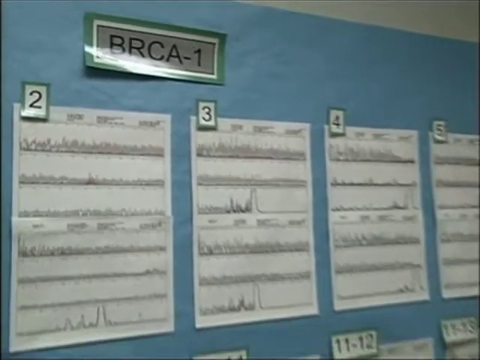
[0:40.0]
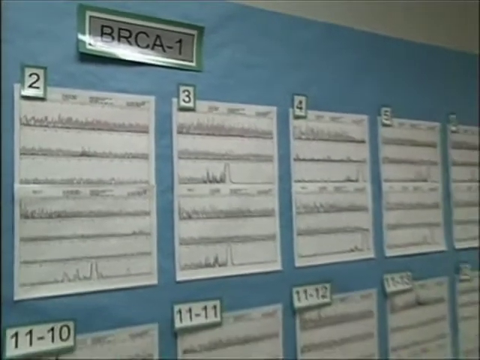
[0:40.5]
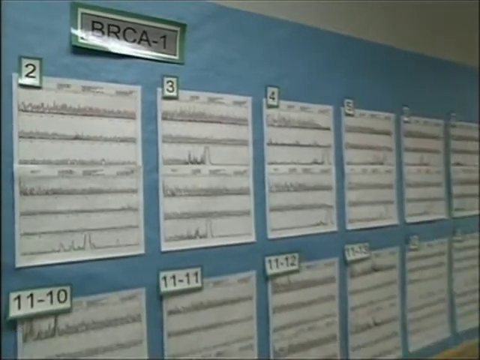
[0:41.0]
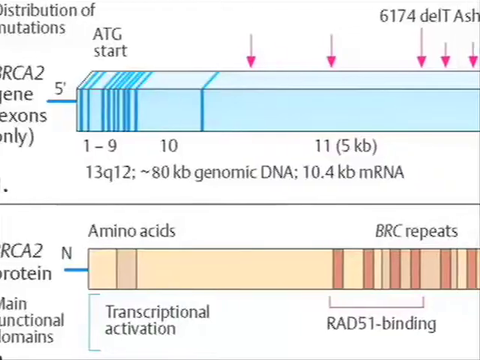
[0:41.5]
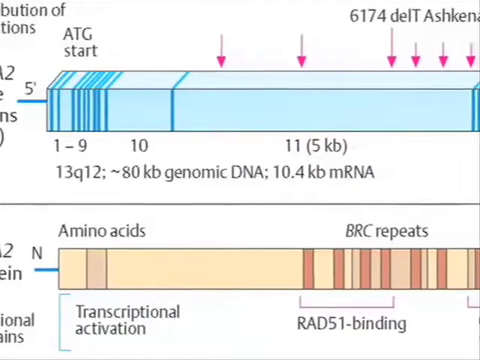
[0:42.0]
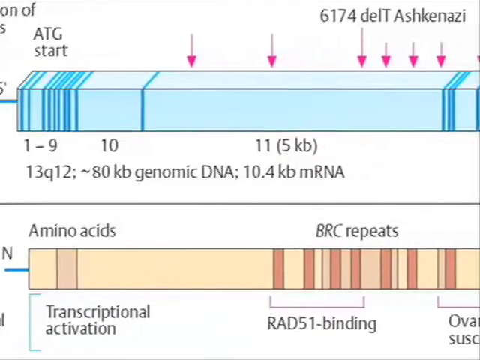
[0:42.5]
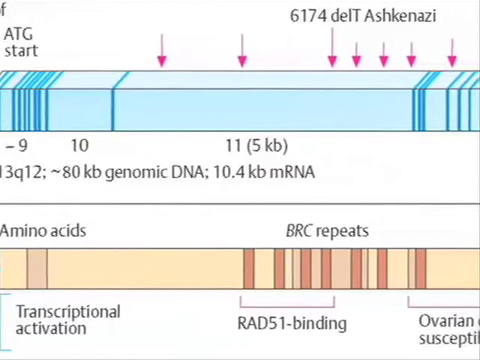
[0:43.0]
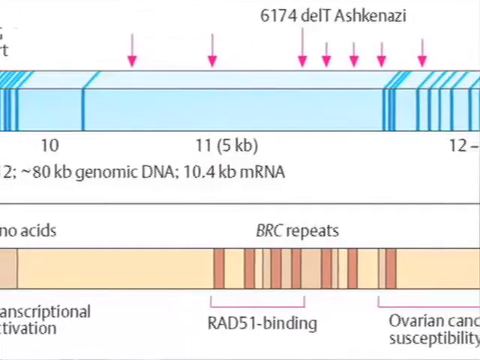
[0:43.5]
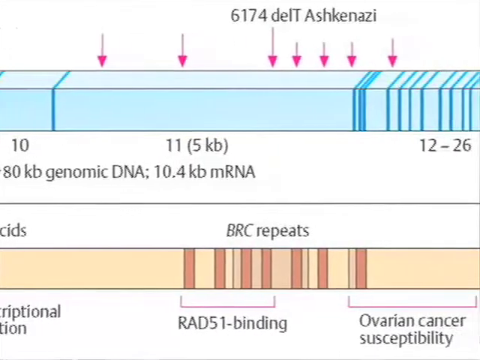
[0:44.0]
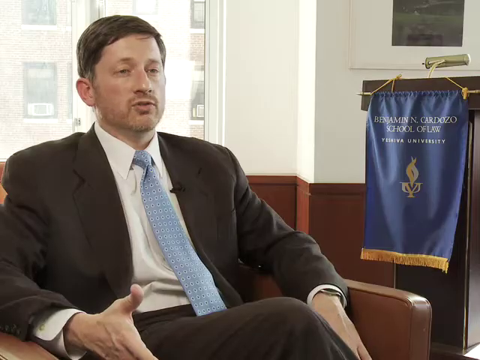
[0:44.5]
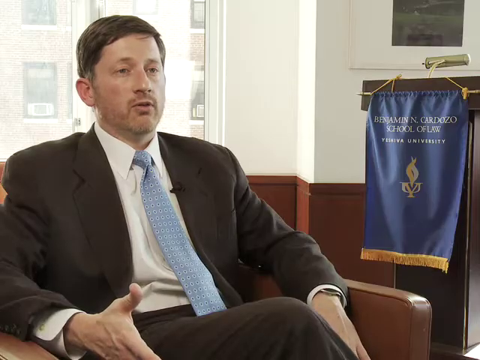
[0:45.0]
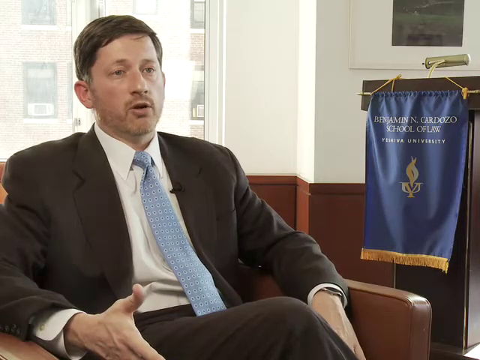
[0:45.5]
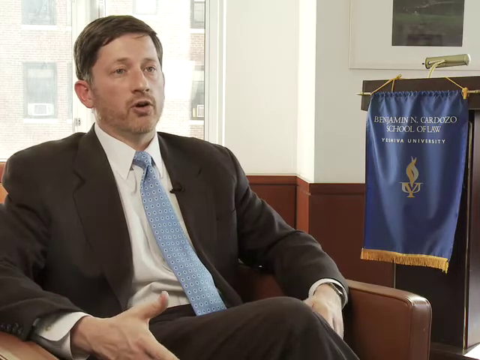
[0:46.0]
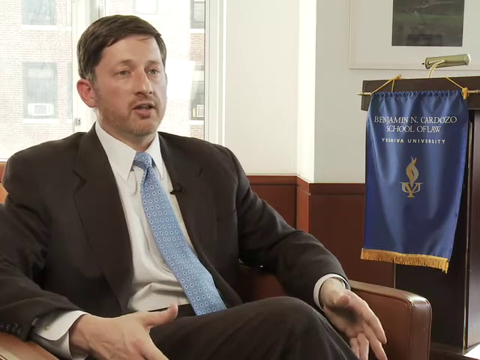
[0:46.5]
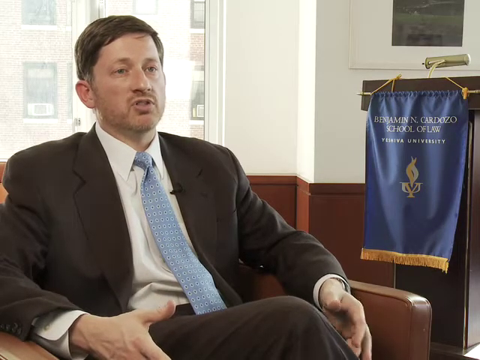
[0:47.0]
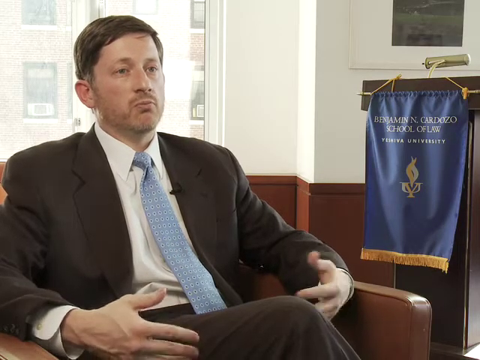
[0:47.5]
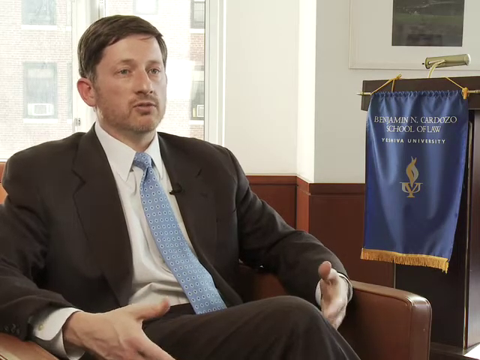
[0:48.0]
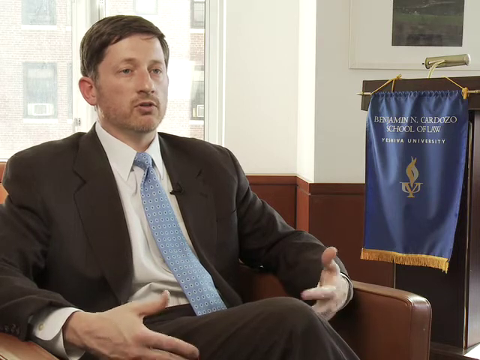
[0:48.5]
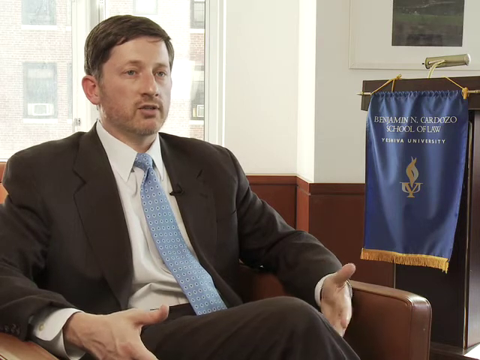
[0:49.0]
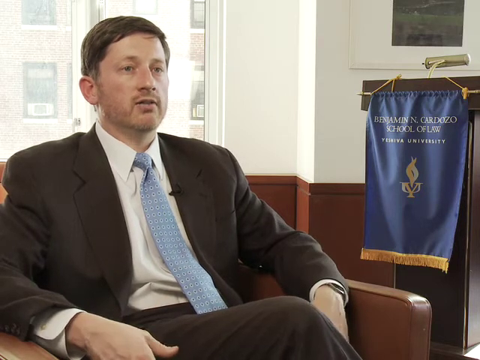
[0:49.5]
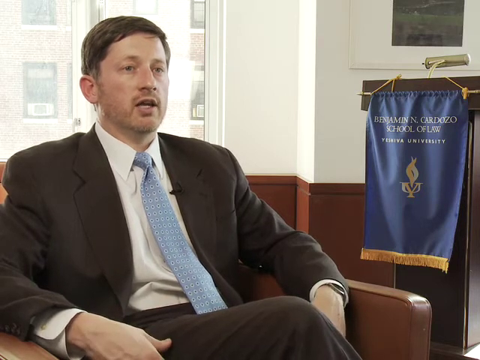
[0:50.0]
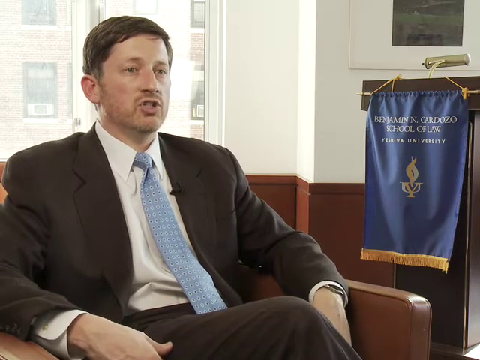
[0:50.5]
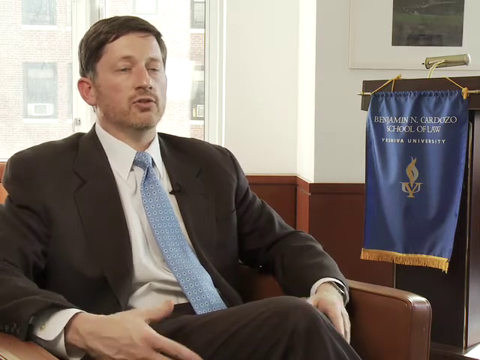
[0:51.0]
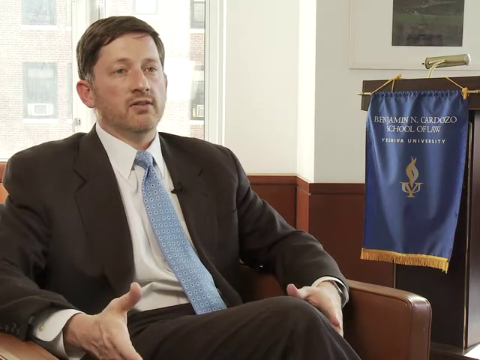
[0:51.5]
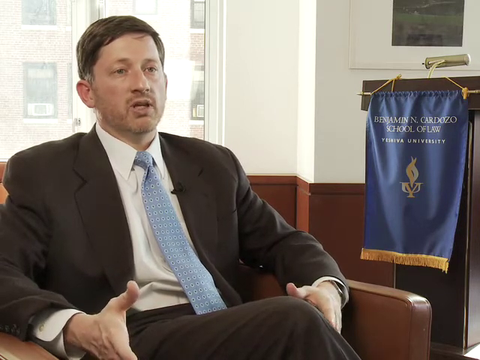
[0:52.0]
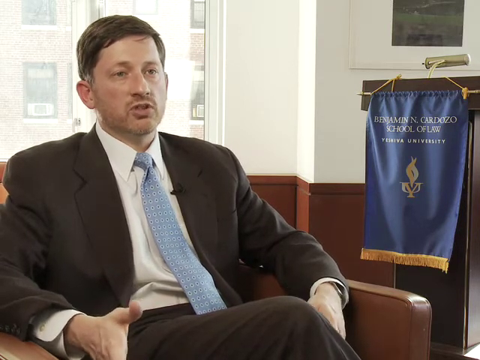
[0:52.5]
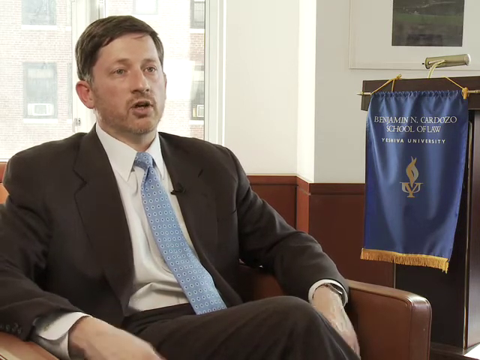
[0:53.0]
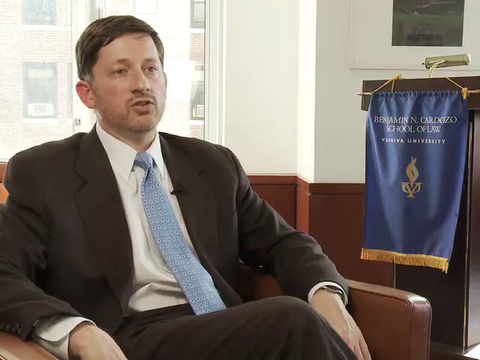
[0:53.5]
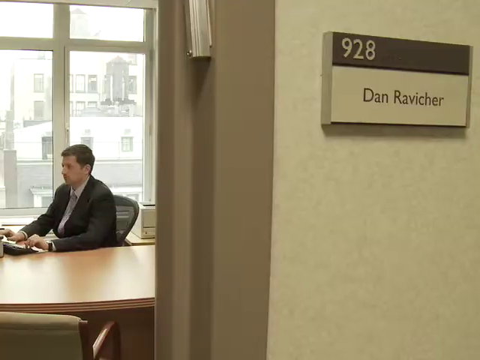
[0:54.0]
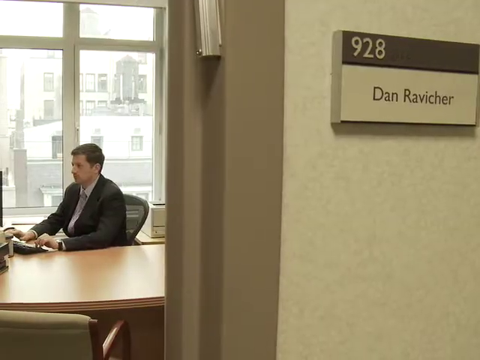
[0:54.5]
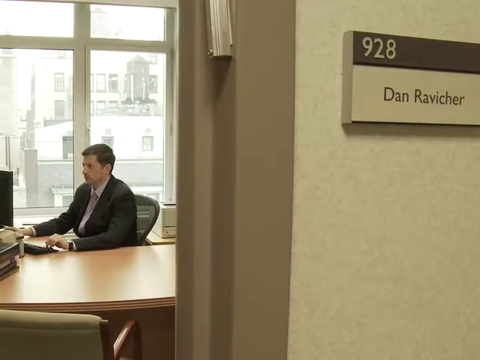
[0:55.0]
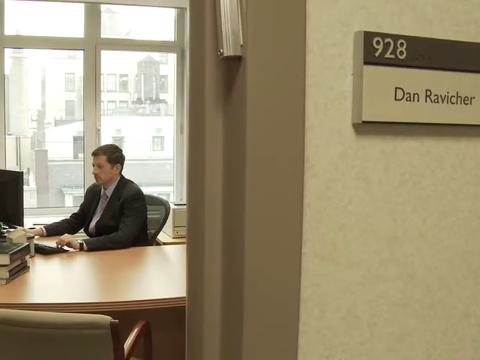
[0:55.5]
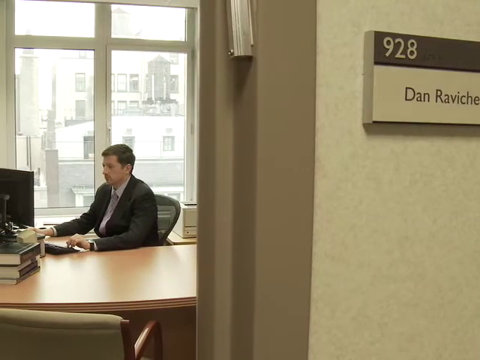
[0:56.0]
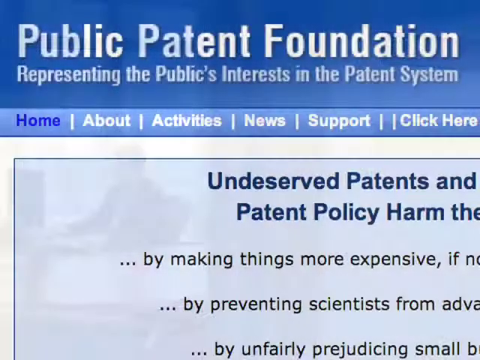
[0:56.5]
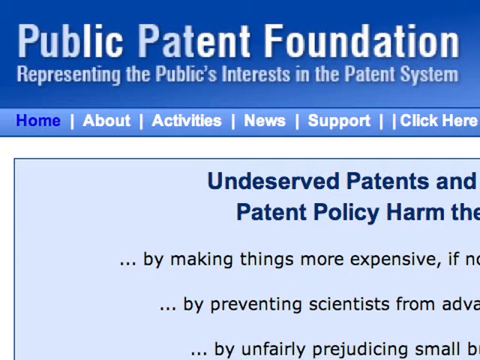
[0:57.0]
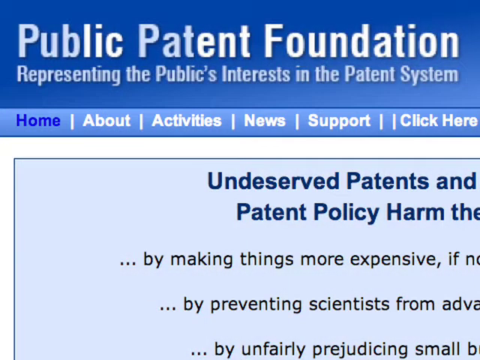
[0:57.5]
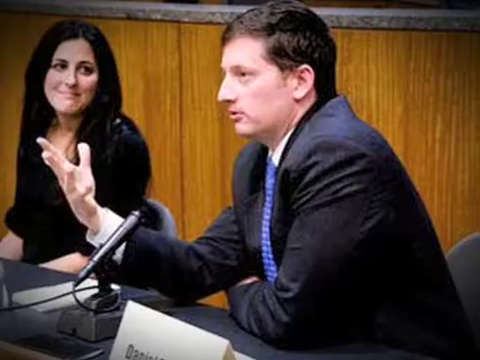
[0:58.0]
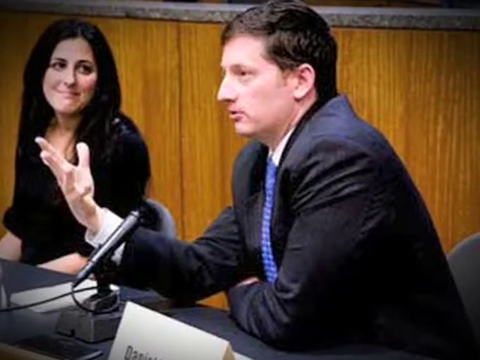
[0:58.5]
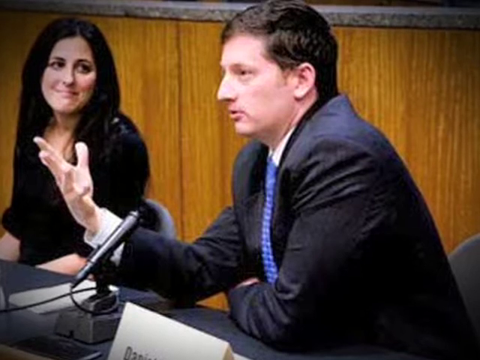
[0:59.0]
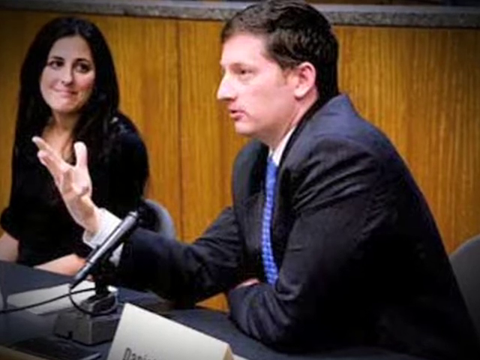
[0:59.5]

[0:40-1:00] Several sheets of paper are stapled to a blue wall. A label at the top says "BRCA-1" in all-capital black letters, with a white border around it and a green border around that. The papers are in a vertical position and seem to have line graphs on them, perhaps heart rate monitors; they are numbered 2, 3, 4 and 5 and have a dark green border. The view zooms out, showing more sheets below, and then switches to a different video showing two horizontal bars: a light blue bar on top and a yellowy-orange bar on the bottom. Pink arrows pointing down label the bars from above the top bar. Black text in the upper left says "ATG start." Along the bottom, the bars are labeled 1 through 9, then after a space 10, and about two-thirds of the way over 11, followed by "(5kb)".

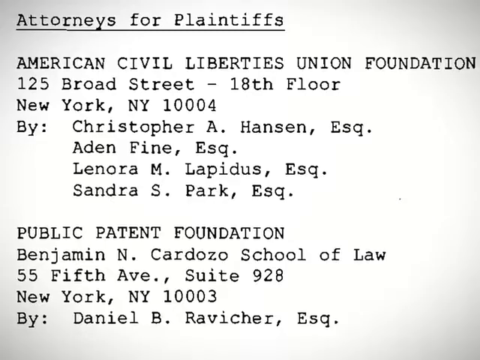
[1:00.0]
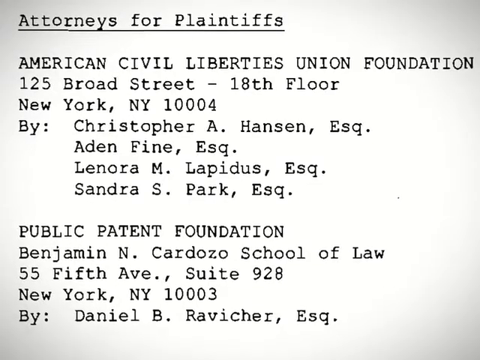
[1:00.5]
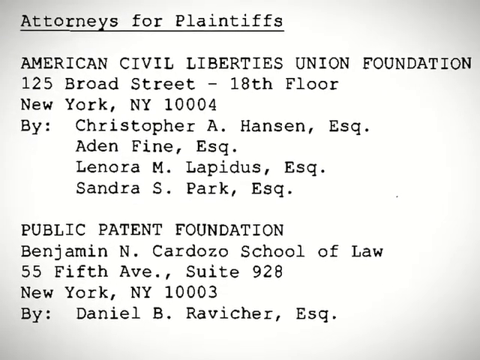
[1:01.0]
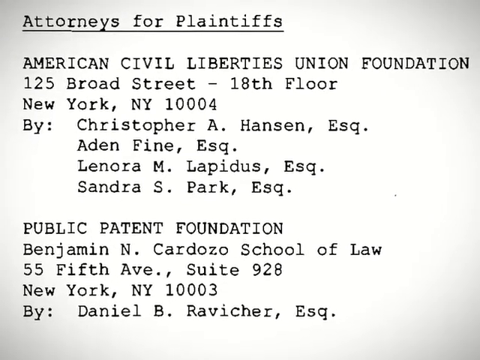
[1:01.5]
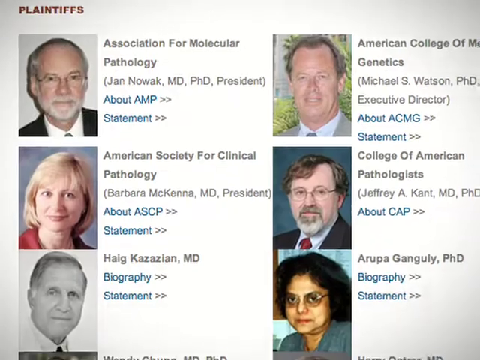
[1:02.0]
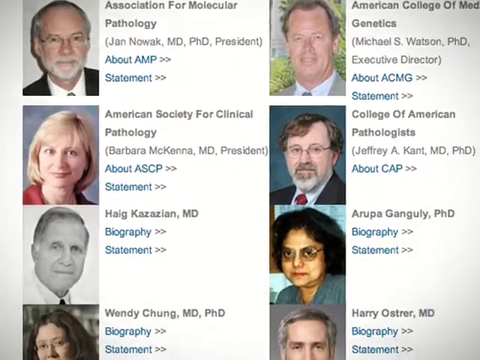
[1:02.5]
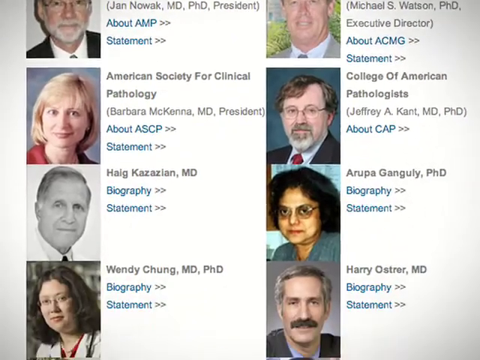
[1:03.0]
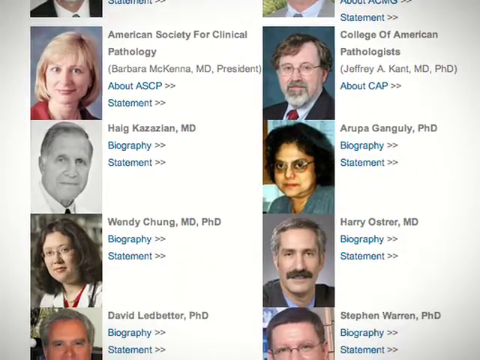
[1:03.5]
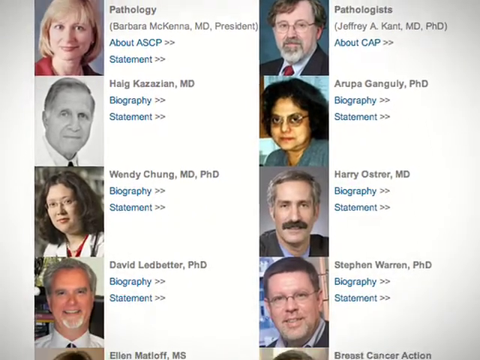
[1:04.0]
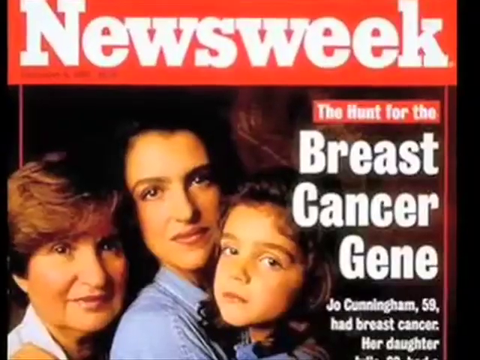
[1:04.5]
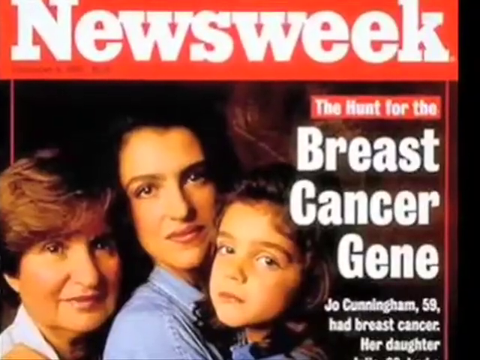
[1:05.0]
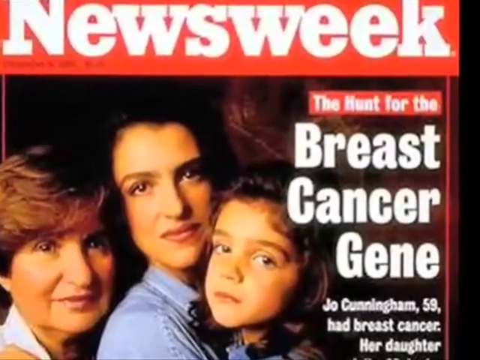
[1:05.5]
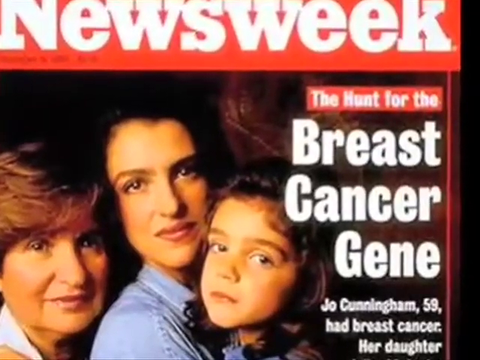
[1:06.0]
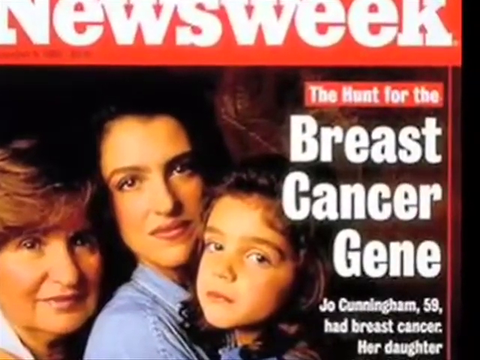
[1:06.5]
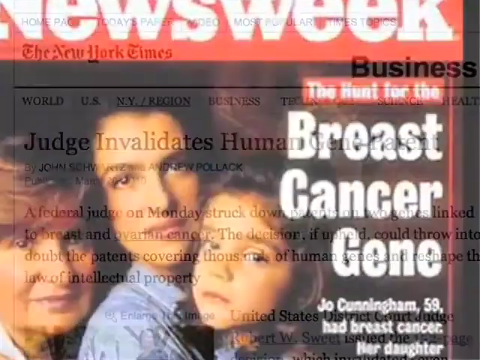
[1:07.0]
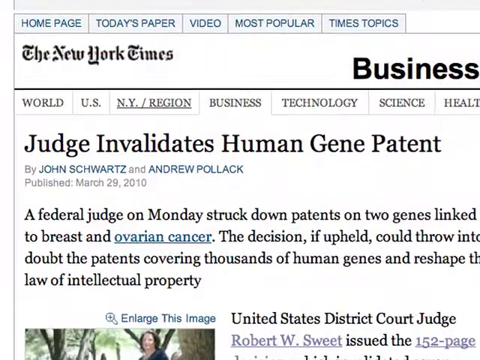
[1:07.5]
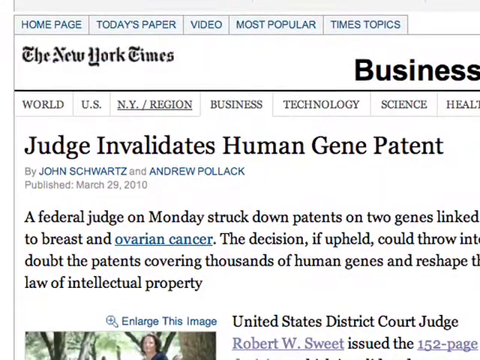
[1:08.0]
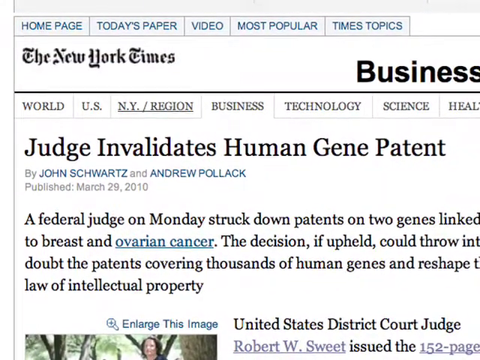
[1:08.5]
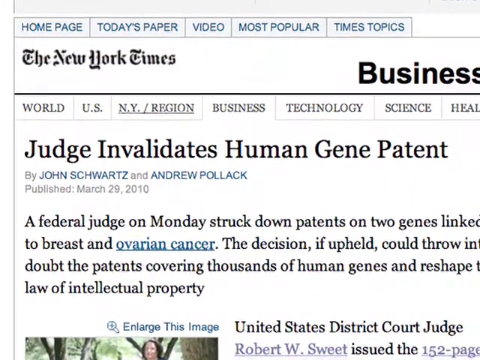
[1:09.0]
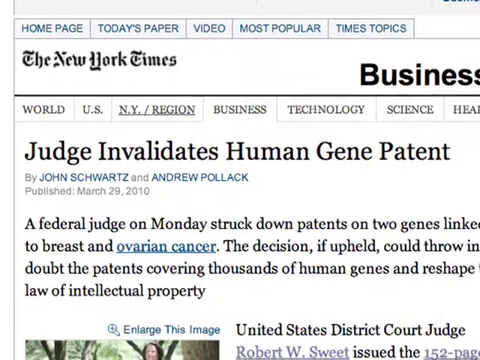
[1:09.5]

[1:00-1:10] The view is zoomed in on a typed piece of paper whose black text looks to be in a kind of typewriter font, judging by the ink and how the letters are formed. At the top it says "Attorneys for Plaintiffs, American Civil Liberties Union Foundation, 125 Broad Street, 18th floor, New York, New York, 1004 by Christopher A. Hansen, ESQ, Aiden Fine, ESQ, Lenora M. Lepidus, ESQ, Sandra S. Park, ESQ, Public Patent Foundation, Benjamin N. Cardozo School of Law".